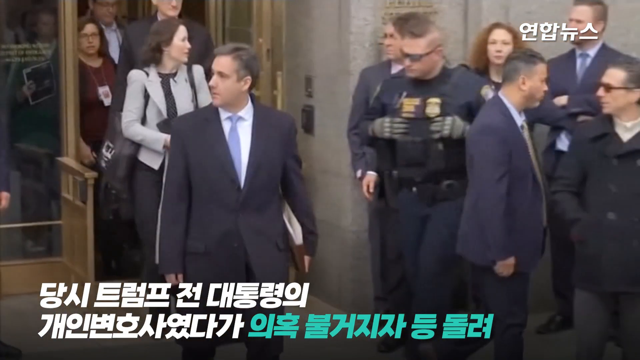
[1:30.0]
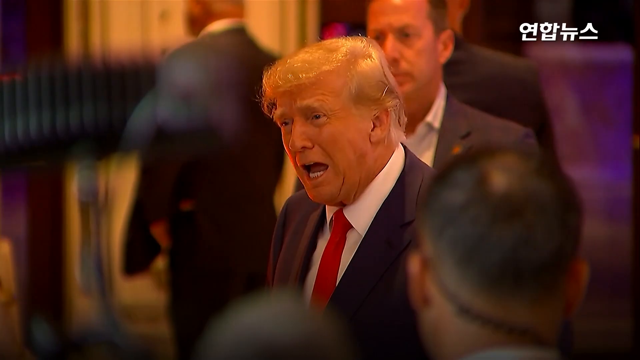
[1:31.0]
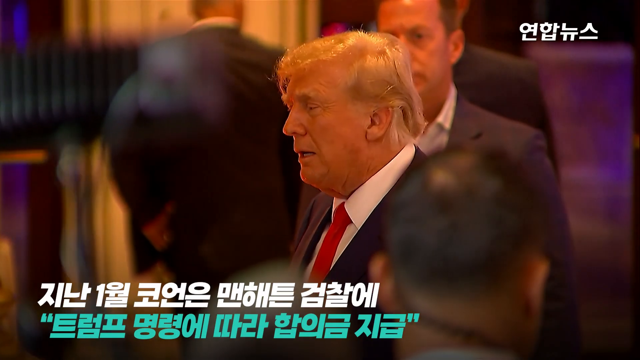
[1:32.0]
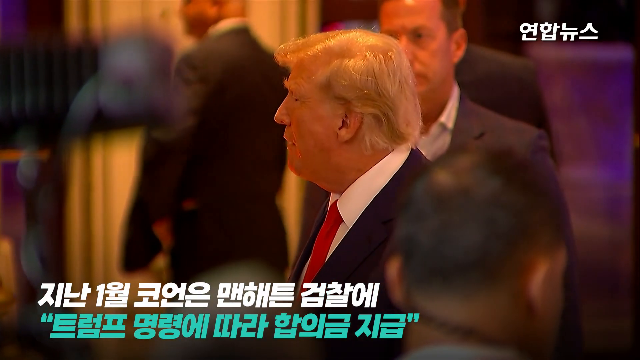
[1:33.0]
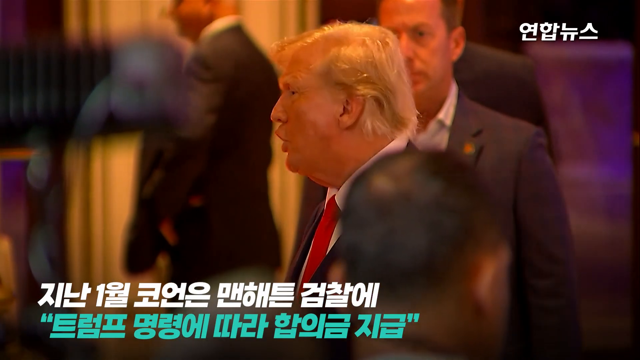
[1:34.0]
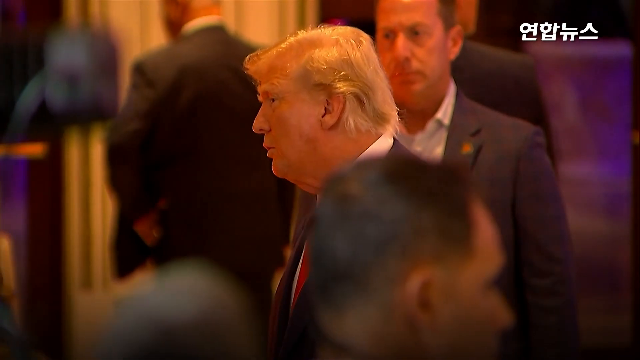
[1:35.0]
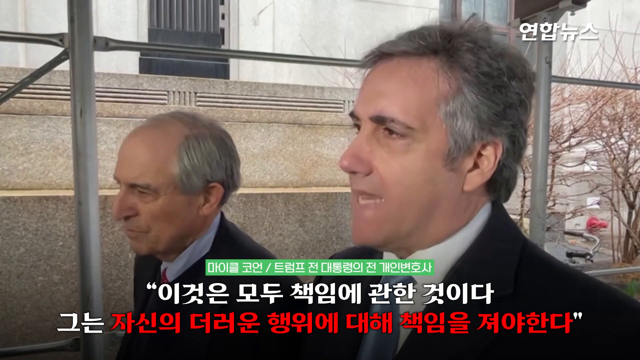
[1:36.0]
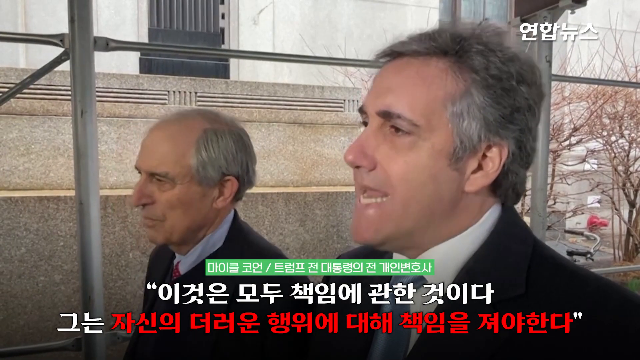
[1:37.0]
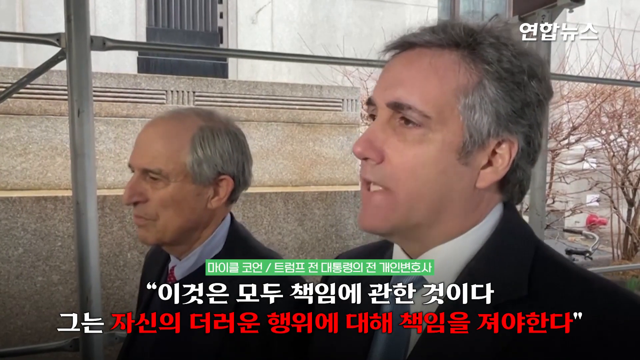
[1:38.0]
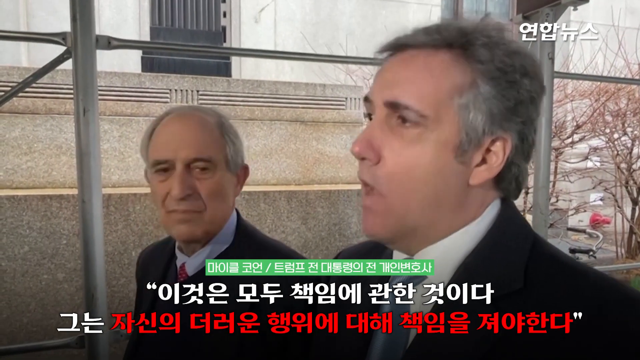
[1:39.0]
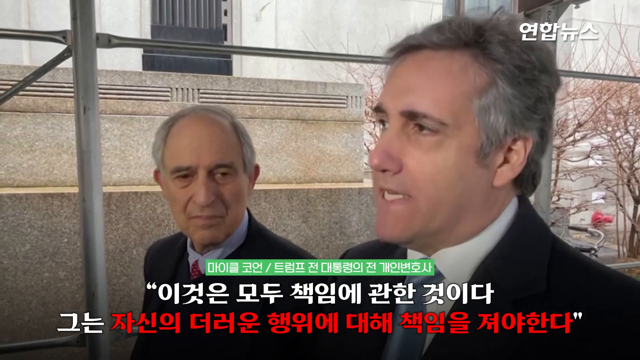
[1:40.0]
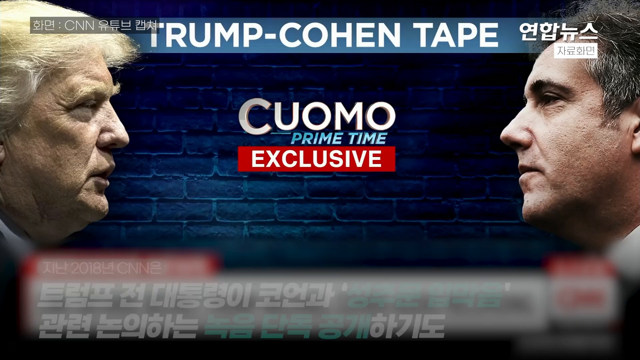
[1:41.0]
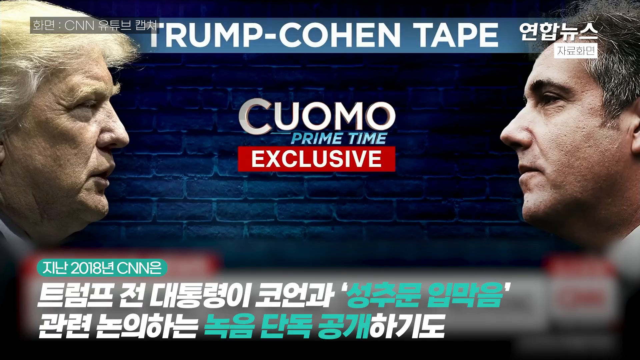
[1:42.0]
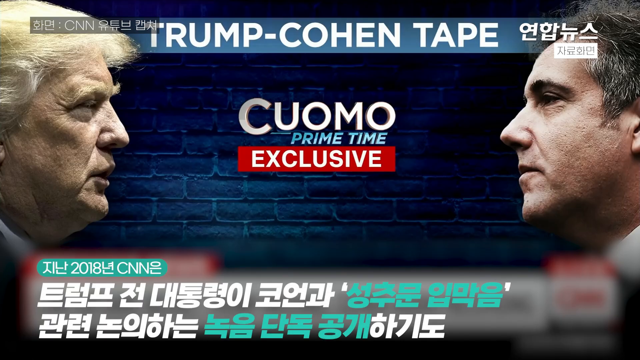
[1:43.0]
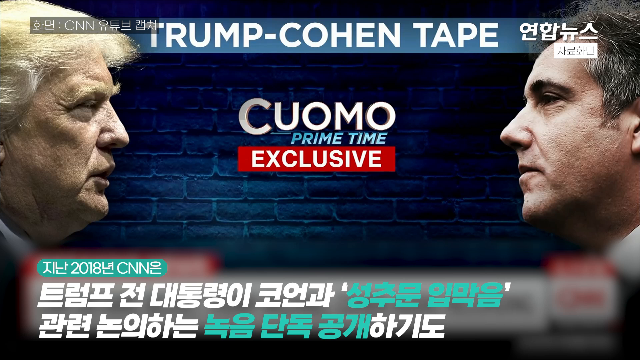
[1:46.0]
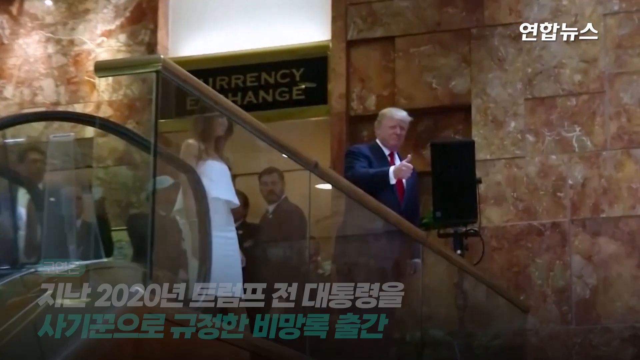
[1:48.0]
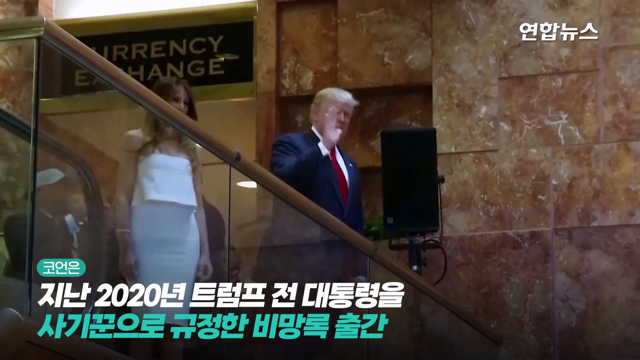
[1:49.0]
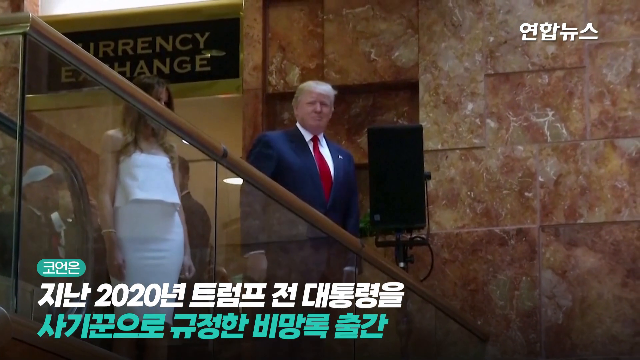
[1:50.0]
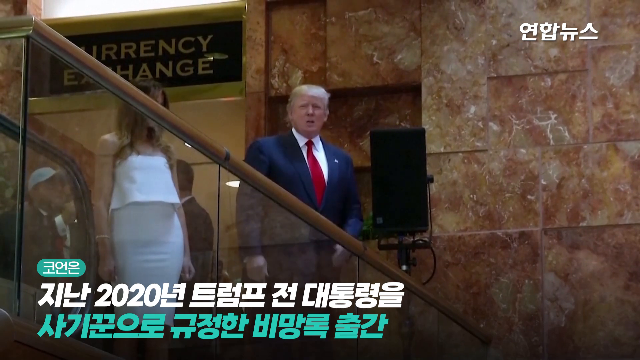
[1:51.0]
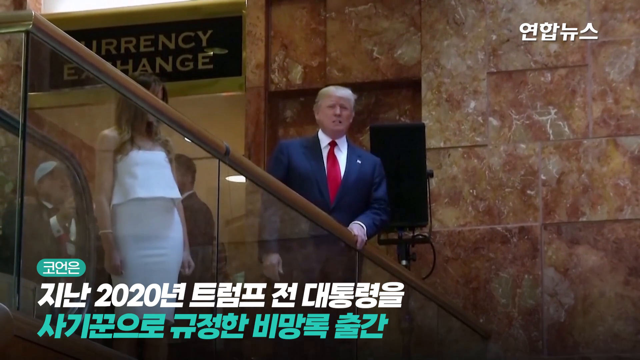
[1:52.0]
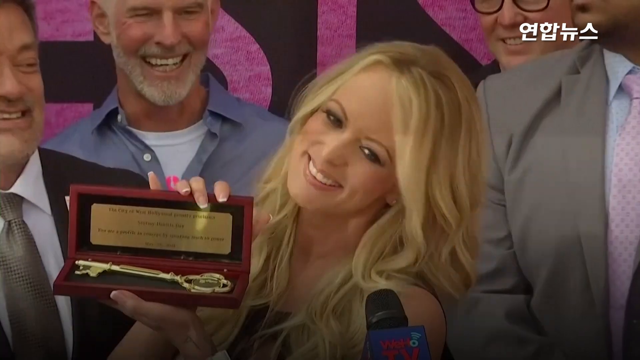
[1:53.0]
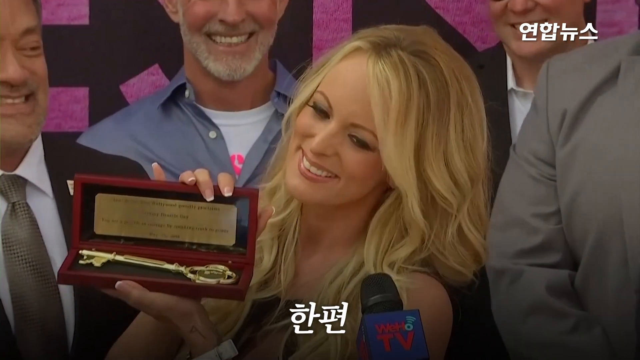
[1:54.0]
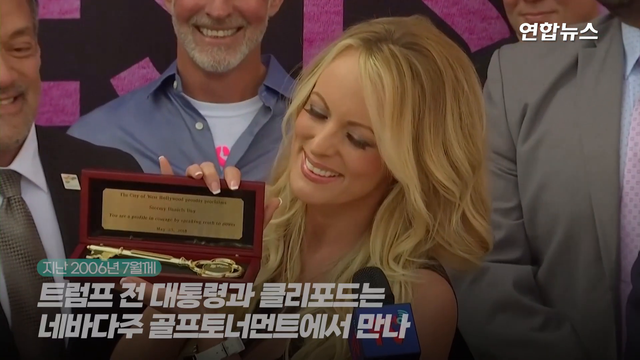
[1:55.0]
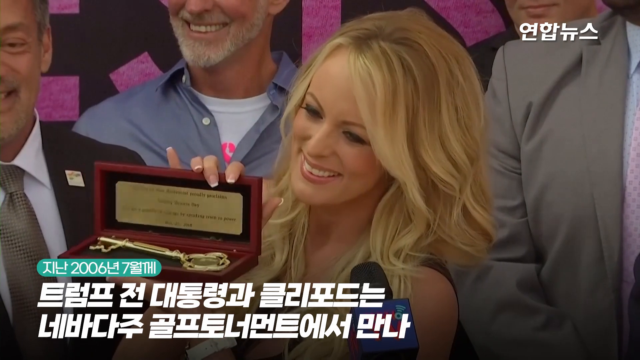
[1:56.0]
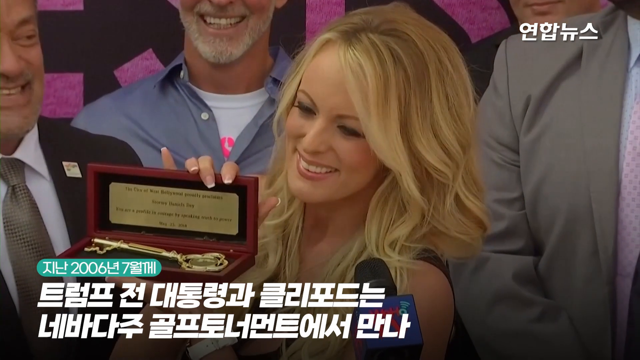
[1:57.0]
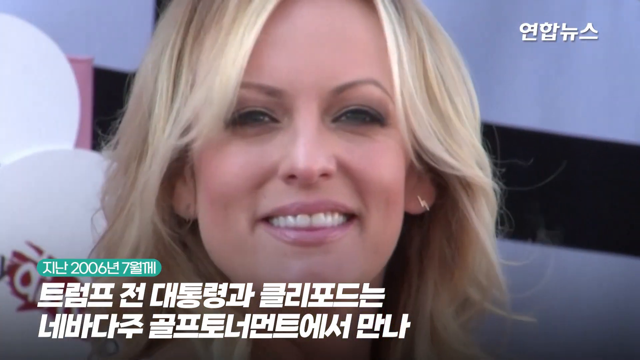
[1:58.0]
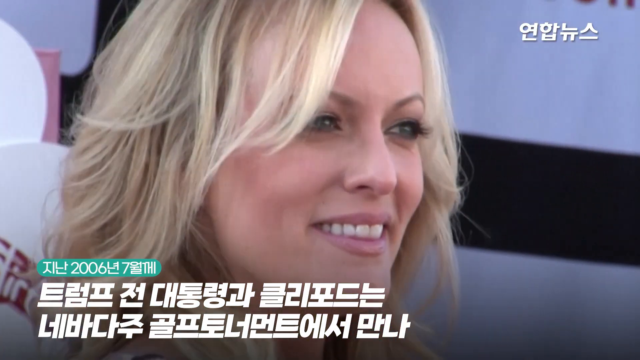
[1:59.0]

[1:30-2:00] Donald Trump appears at another news conference, and Michael Cohen holds a news conference on the street with his attorney. Text reading "Trump Cohen tape, Como, primetime exclusive" appears in what is apparently a TV ad for a Chris Como primetime exclusive, with writing that is presumably Chinese. Donald Trump and Melania Trump are shown at the top of the escalator in Trump Tower in New York City. A picture shows Stormy Daniels holding up an award or something similar, and then another video of Michael Cohen follows.